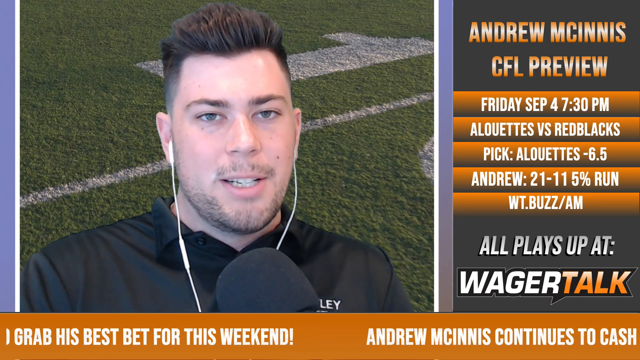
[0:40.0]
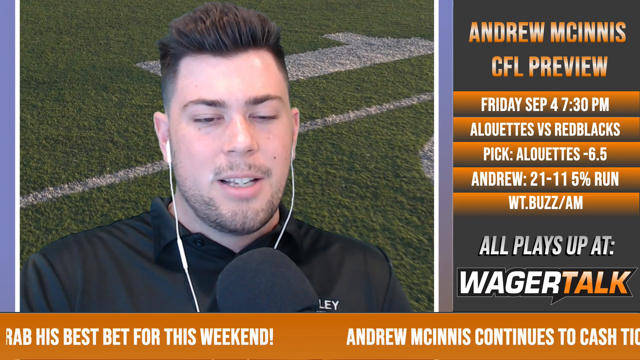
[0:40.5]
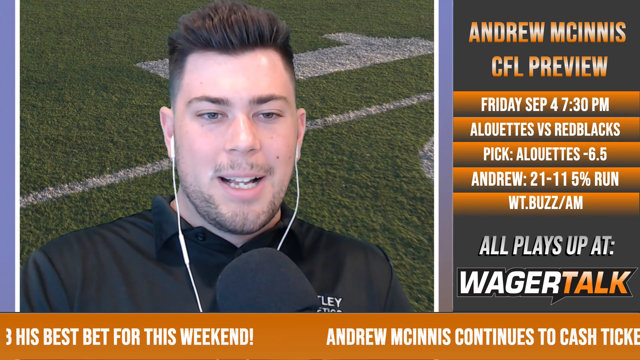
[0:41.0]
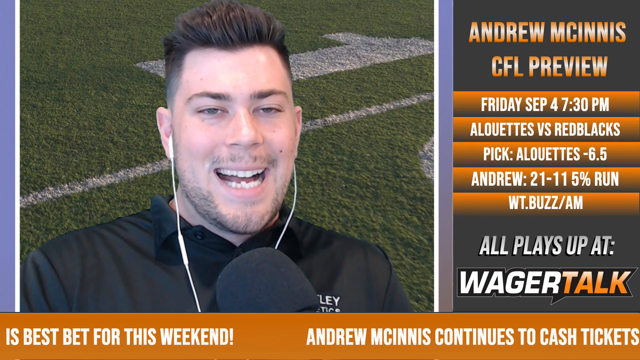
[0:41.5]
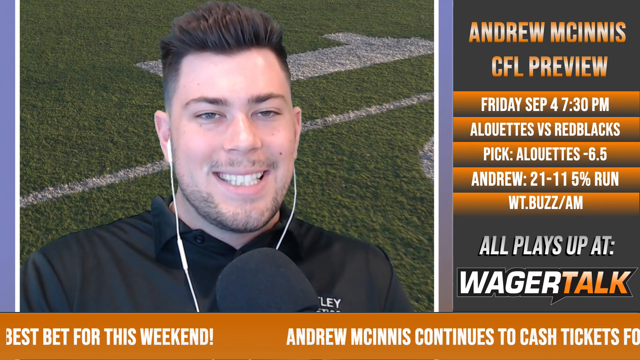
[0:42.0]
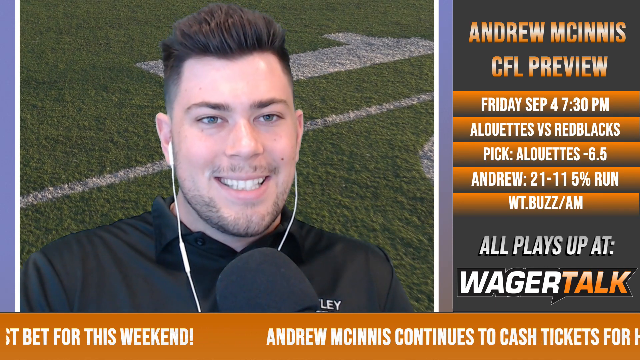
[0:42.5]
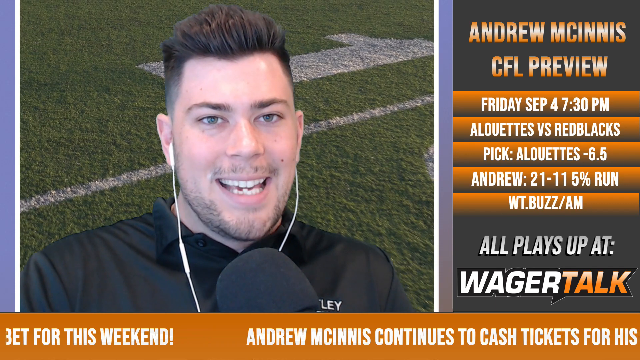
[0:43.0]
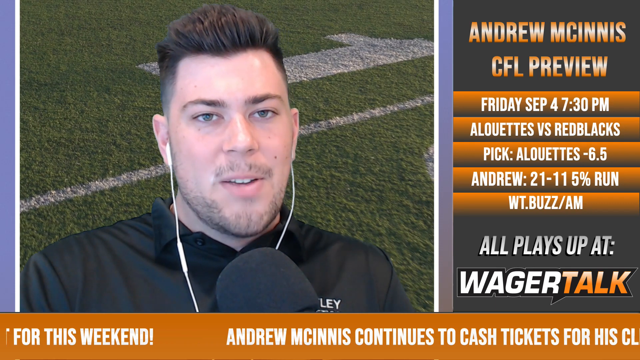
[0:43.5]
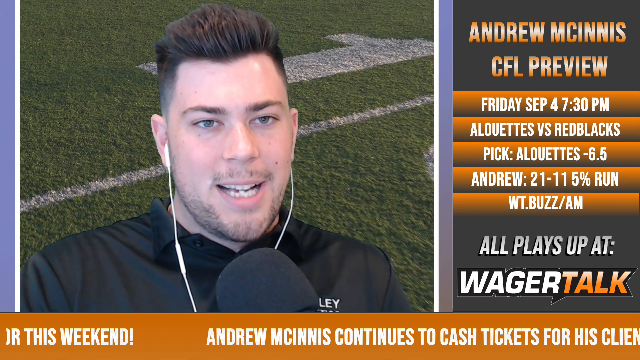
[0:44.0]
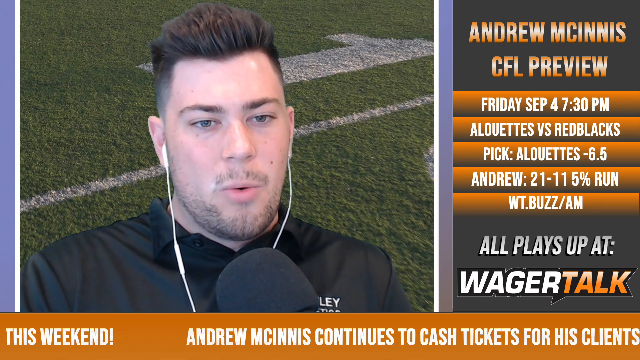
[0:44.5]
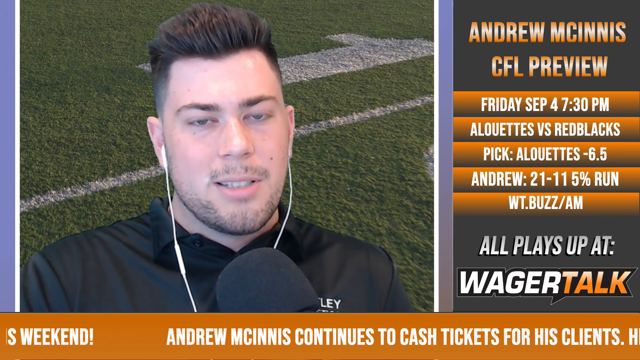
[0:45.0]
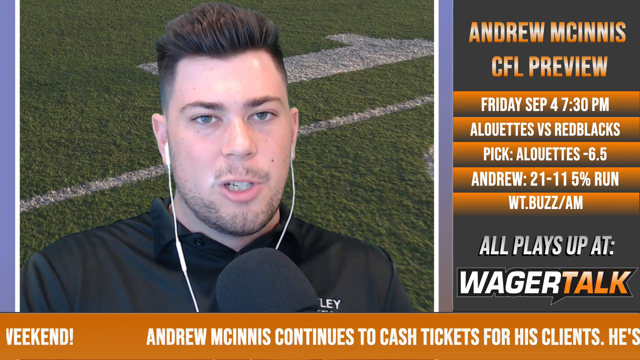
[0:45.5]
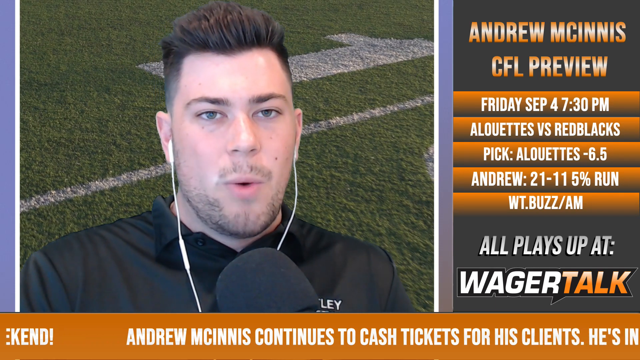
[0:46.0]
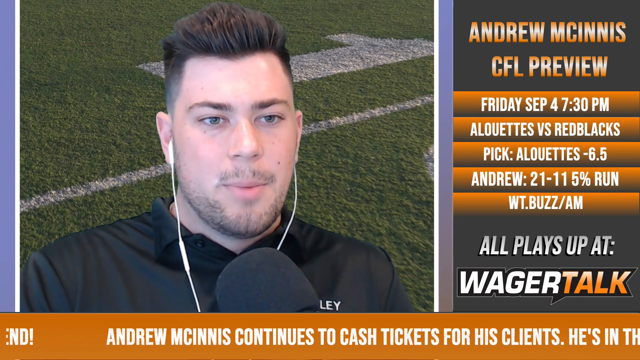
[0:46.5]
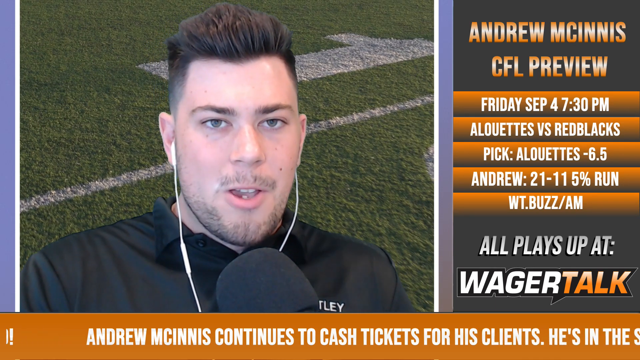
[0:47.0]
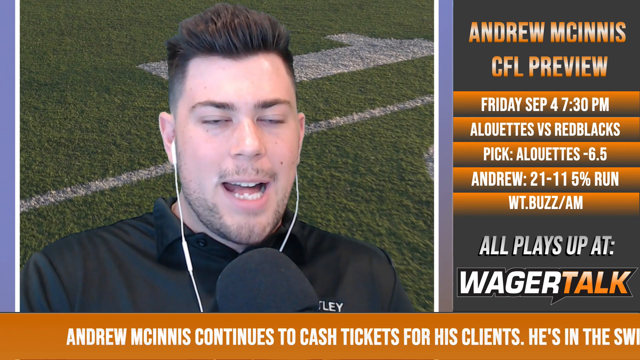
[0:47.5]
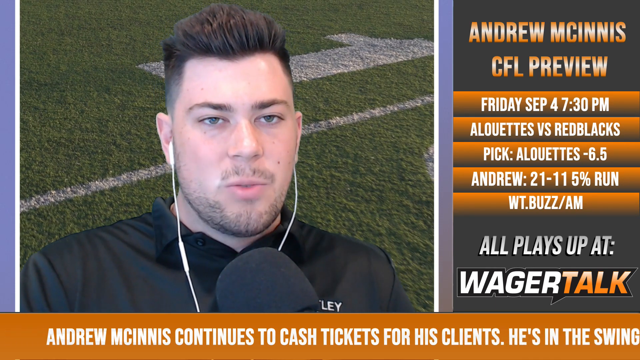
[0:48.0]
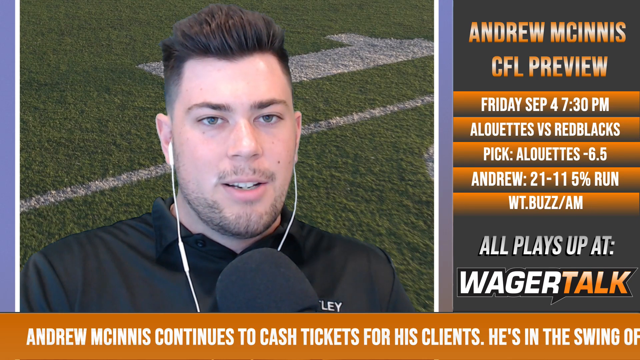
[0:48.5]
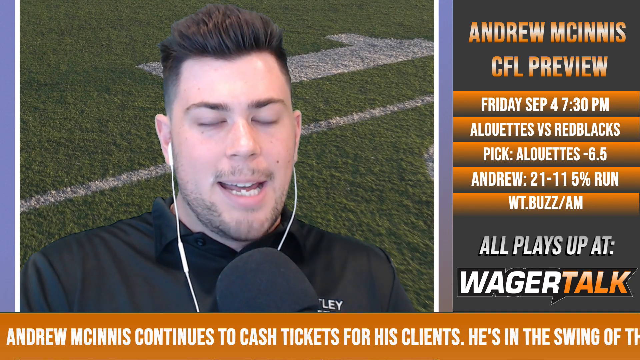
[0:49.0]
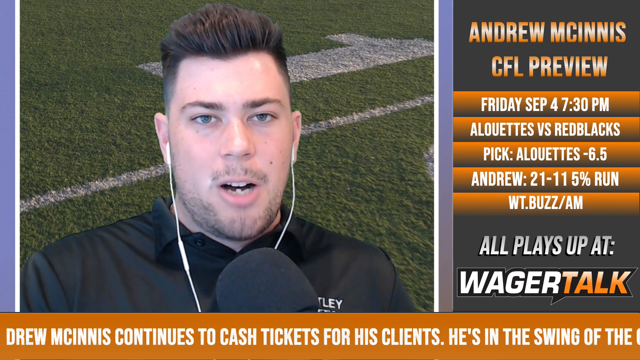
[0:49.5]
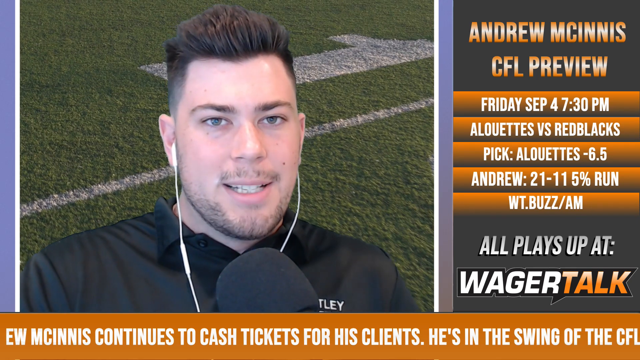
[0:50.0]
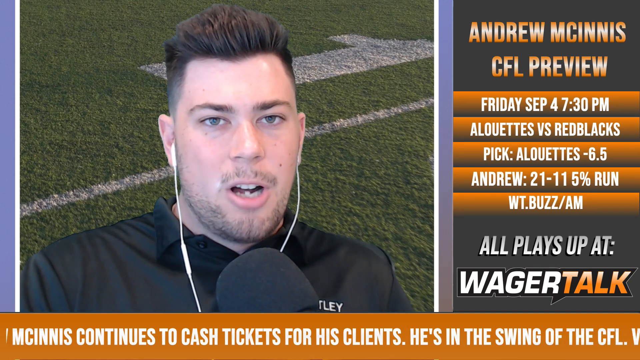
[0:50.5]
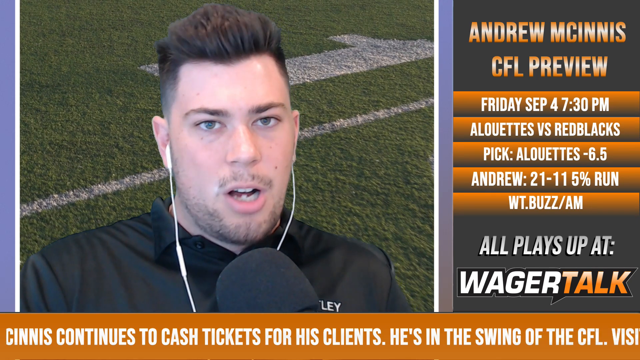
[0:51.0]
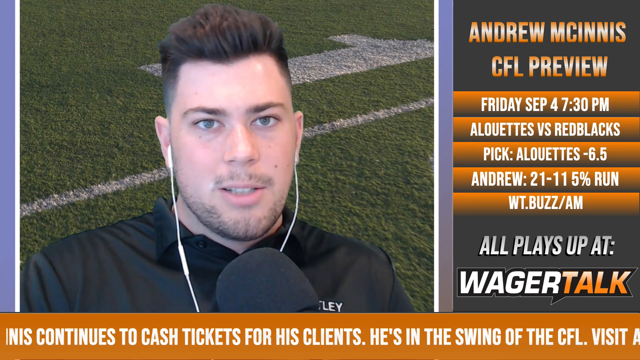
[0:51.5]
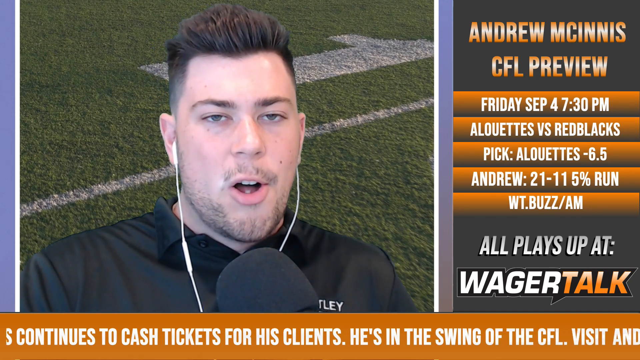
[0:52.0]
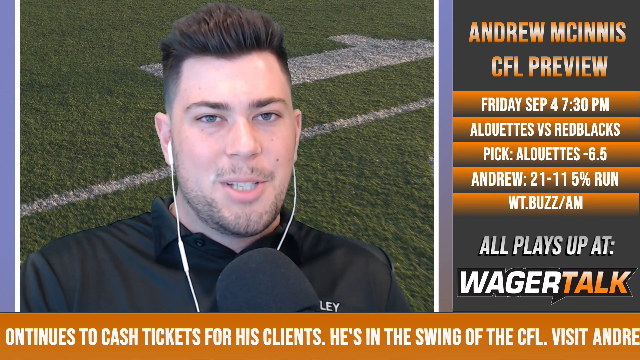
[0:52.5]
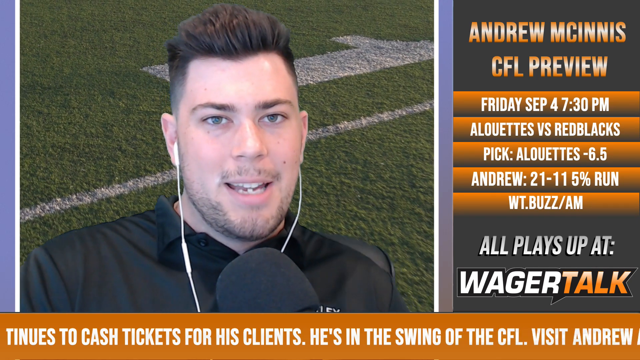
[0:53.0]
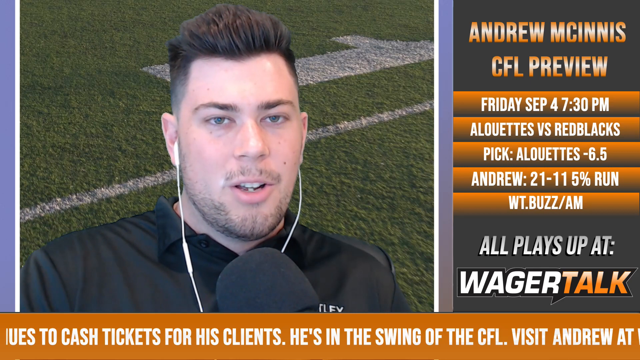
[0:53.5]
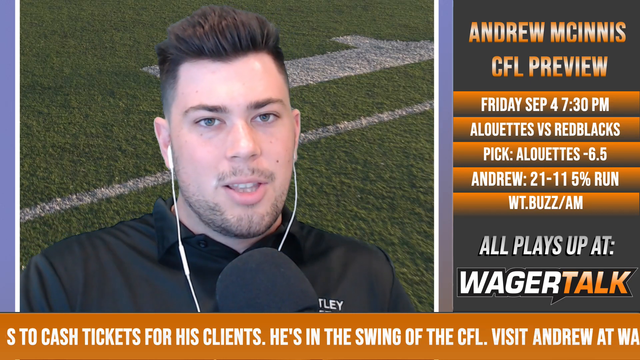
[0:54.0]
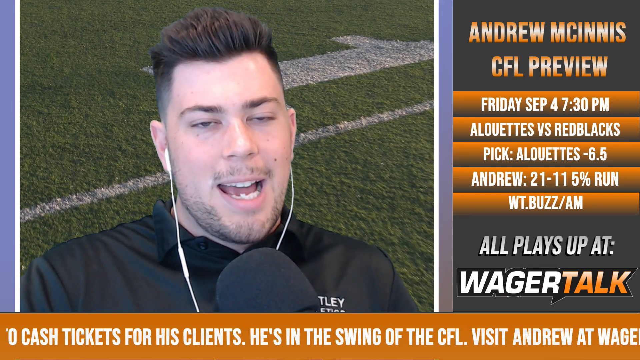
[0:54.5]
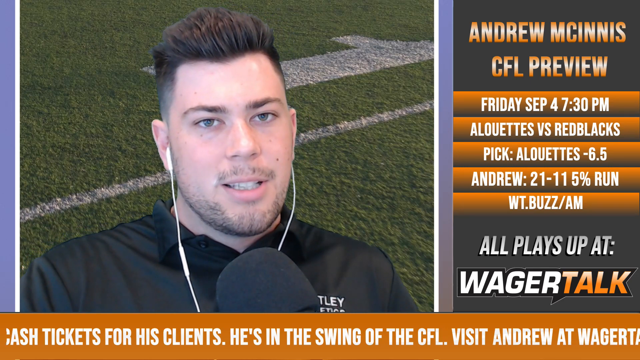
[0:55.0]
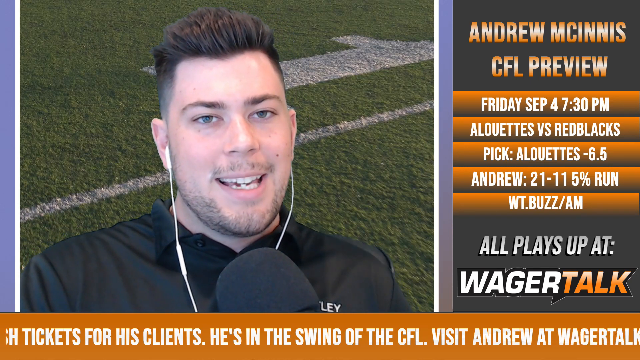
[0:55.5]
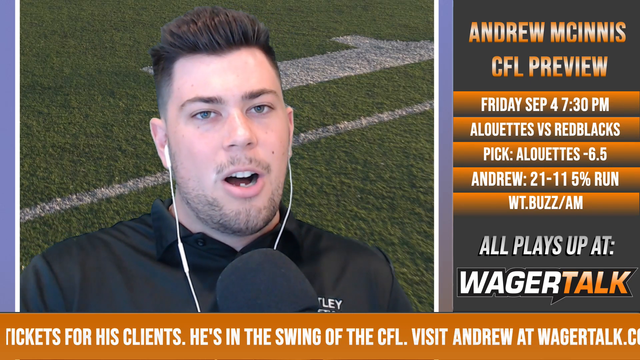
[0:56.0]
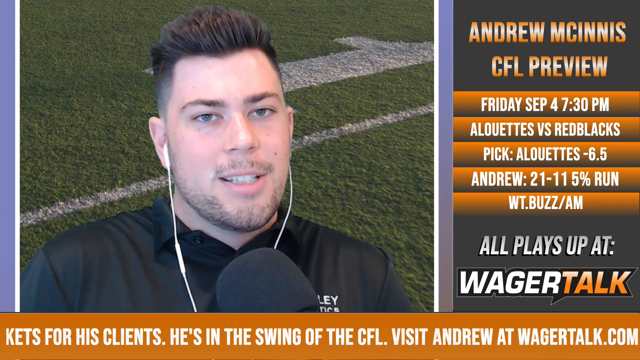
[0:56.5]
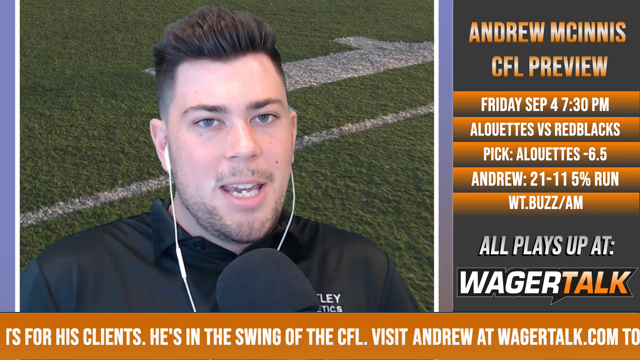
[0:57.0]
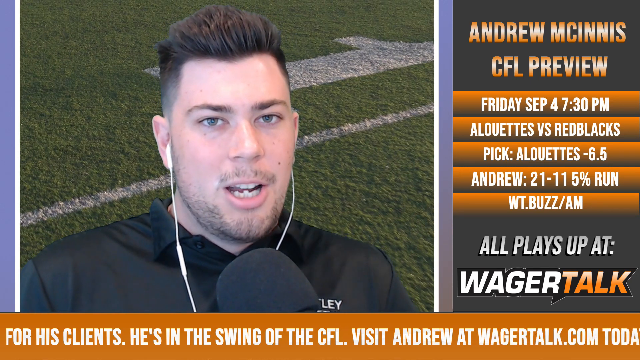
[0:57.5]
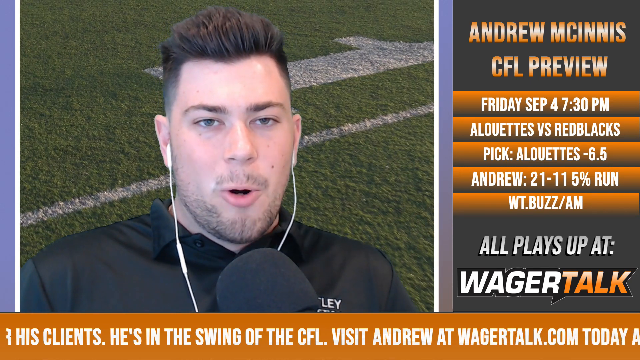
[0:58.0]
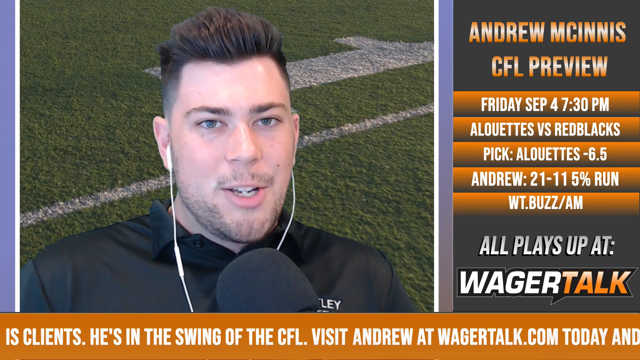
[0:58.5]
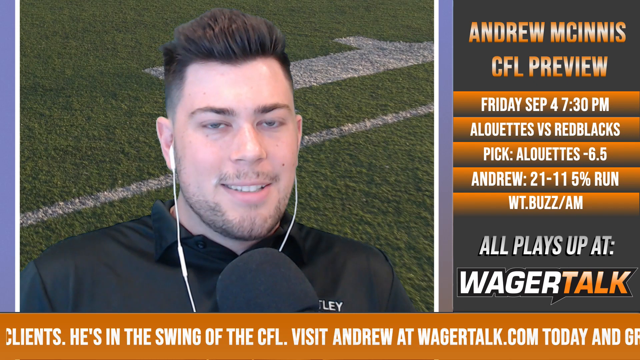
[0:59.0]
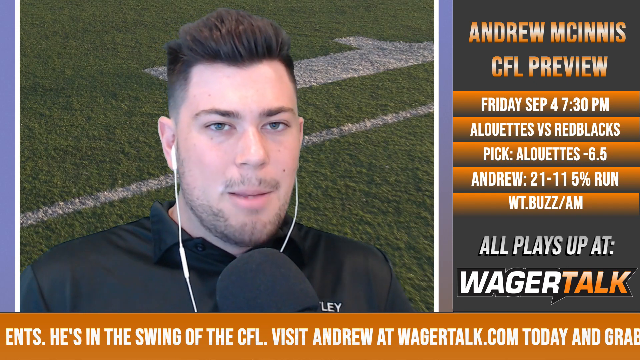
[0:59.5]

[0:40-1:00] The screen is split, with a larger rectangle on the left-hand side showing a man being interviewed. He talks into a black microphone. Behind him is a football field with green grass, a spray-painted white line, the number one behind his head, and what looks like part of a zero to the right. He wears what appears to be a moisture-wicking polyester black polo shirt with lettering over the lapel that might say "Hurley," though the microphone covers part of the words. He has earphones in. On the right side of the screen is text over a gray background, separated by a slight white and blue striped divider. A top line over an orange stripe in white lettering reads "Andrew McGinnis CFL preview Friday September 4th at 7:30 p.m." The next orange stripe with white lettering reads "Alouettes versus Red Blacks," another reads "pick Alouettes 6.5," and the next reads "Andrew 21 to 11 5% run."